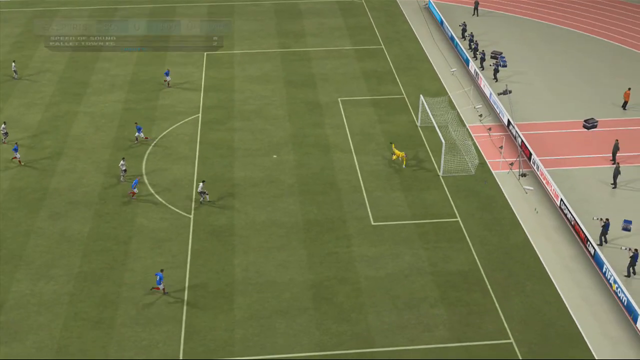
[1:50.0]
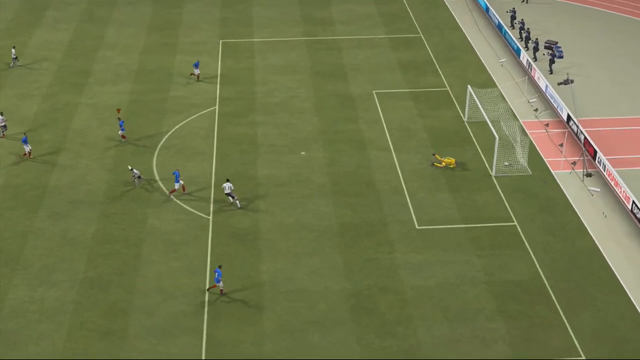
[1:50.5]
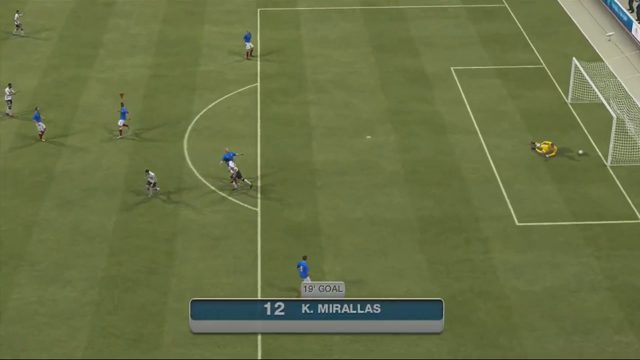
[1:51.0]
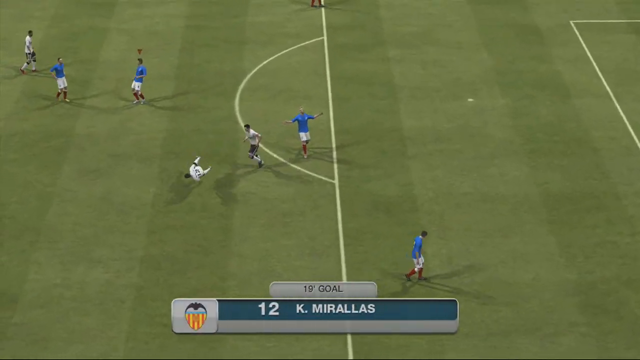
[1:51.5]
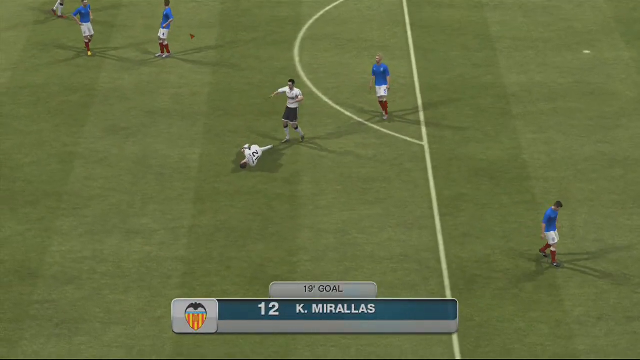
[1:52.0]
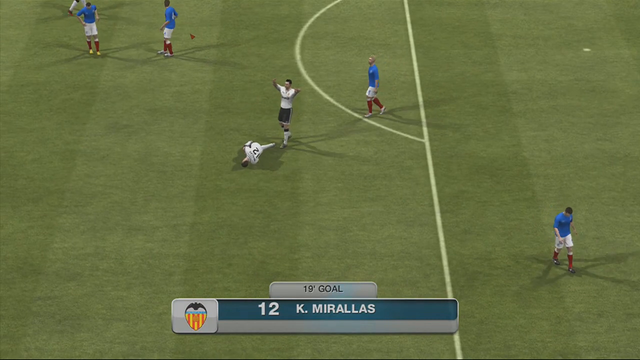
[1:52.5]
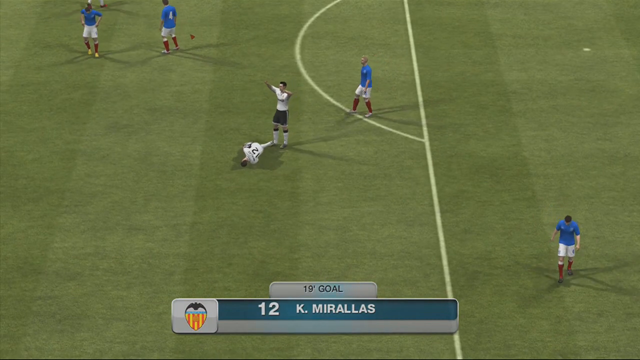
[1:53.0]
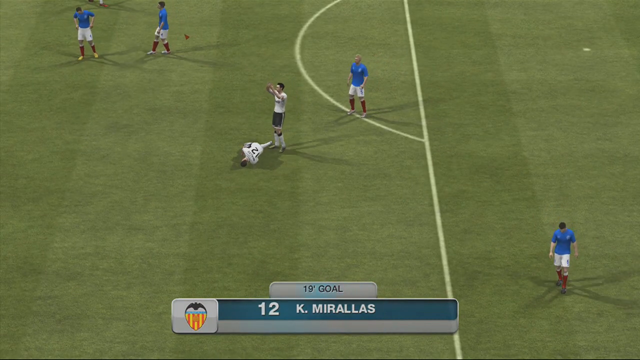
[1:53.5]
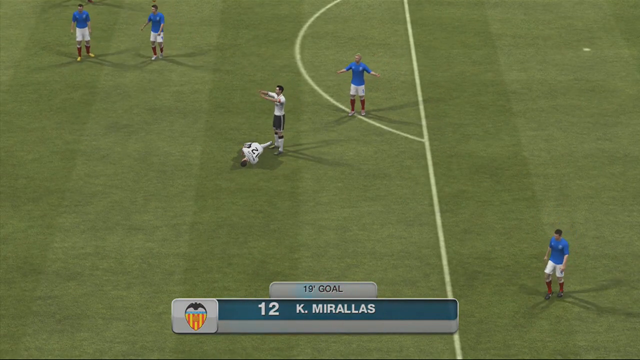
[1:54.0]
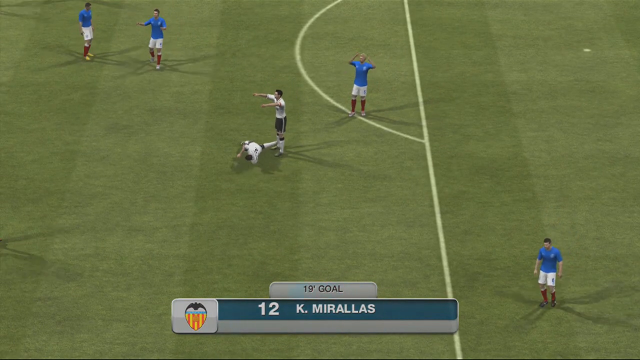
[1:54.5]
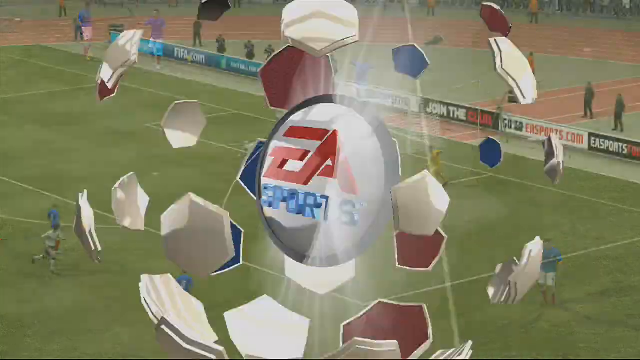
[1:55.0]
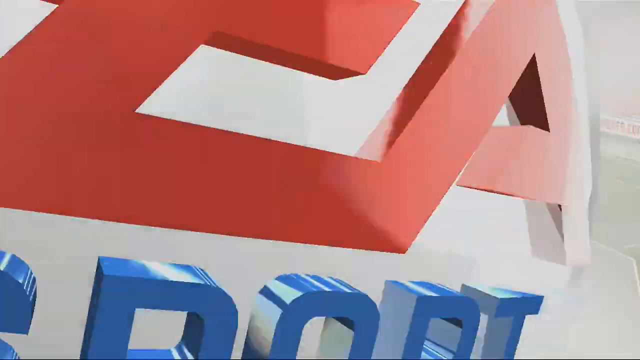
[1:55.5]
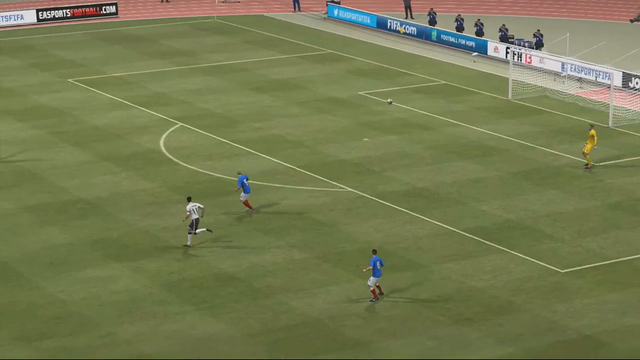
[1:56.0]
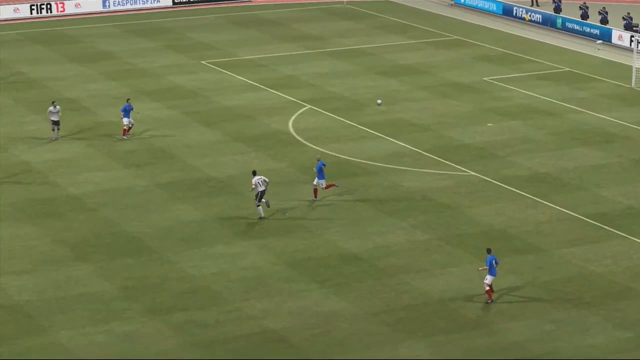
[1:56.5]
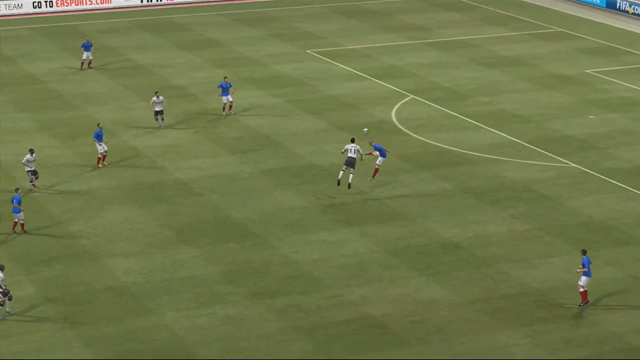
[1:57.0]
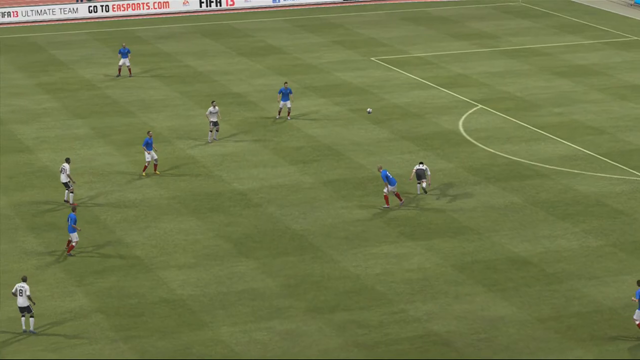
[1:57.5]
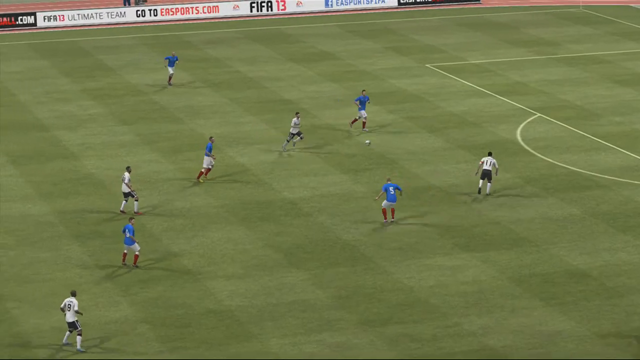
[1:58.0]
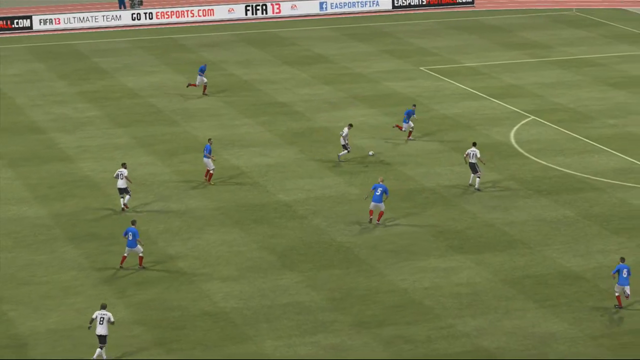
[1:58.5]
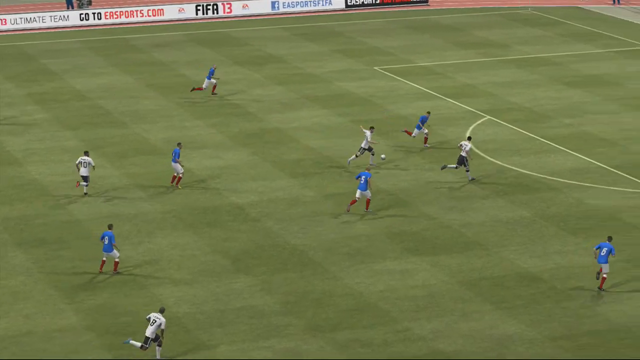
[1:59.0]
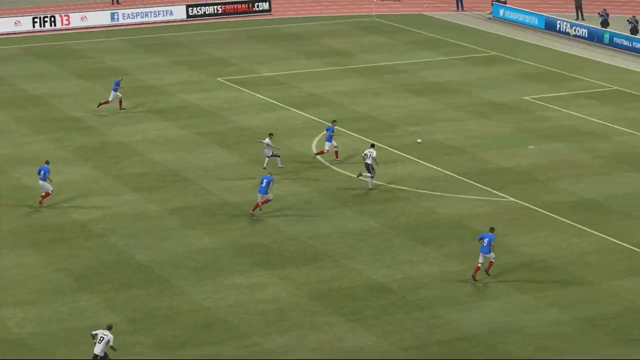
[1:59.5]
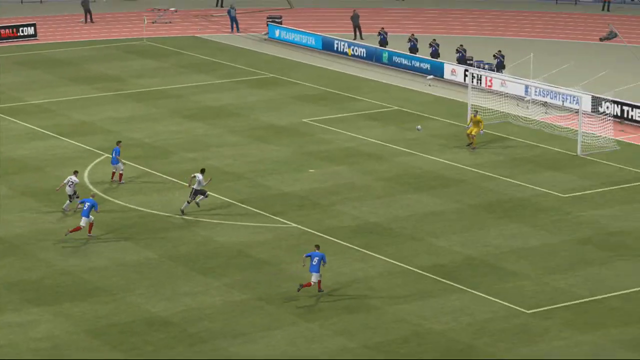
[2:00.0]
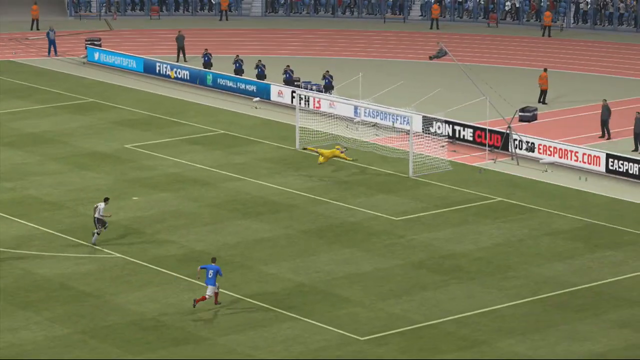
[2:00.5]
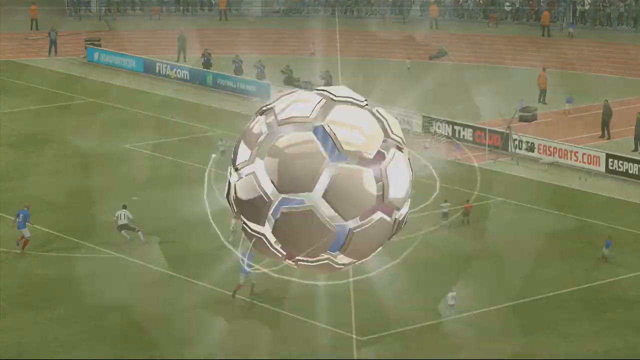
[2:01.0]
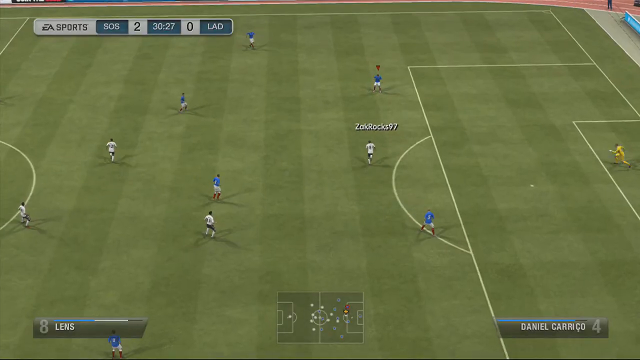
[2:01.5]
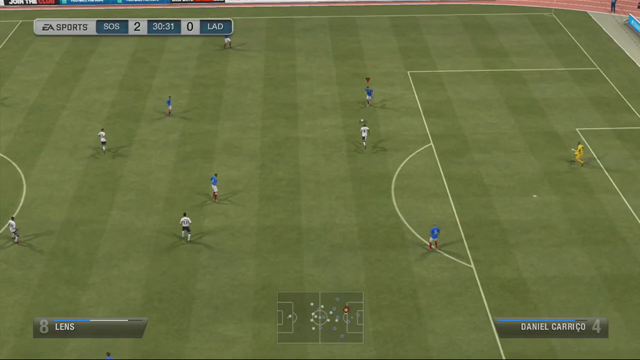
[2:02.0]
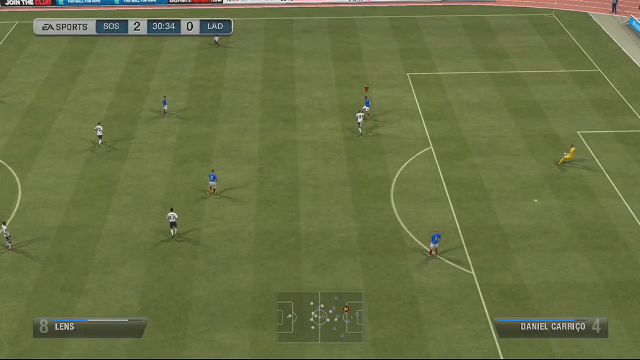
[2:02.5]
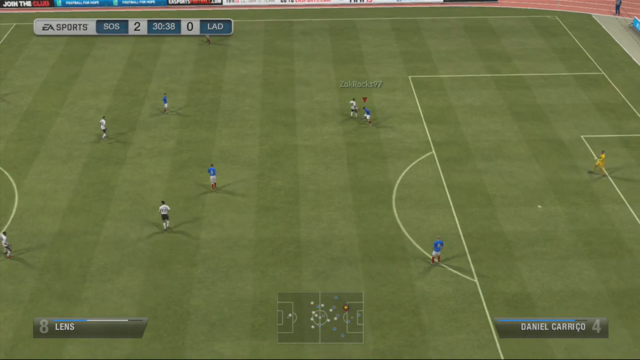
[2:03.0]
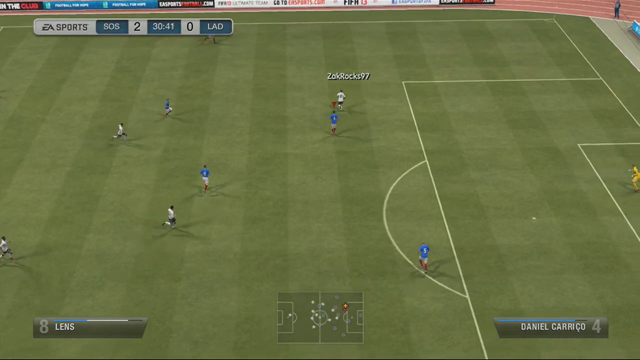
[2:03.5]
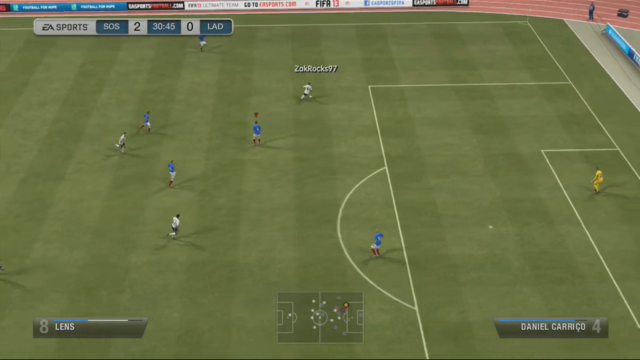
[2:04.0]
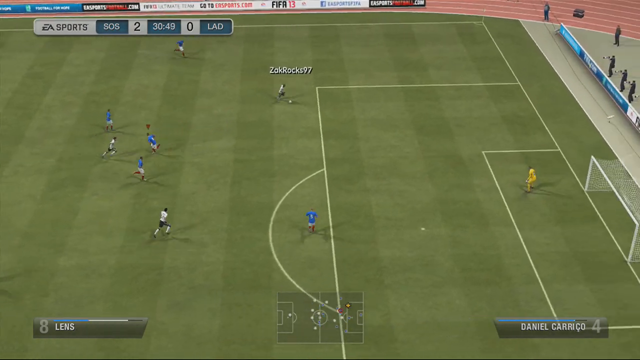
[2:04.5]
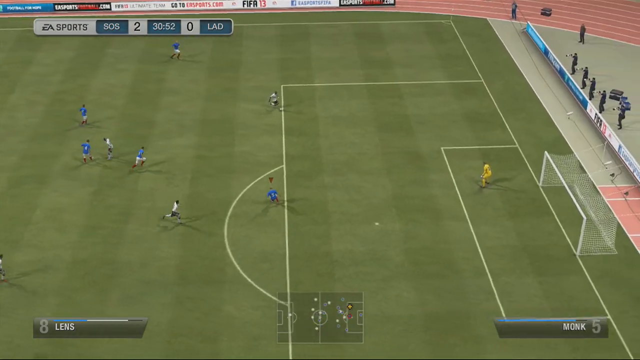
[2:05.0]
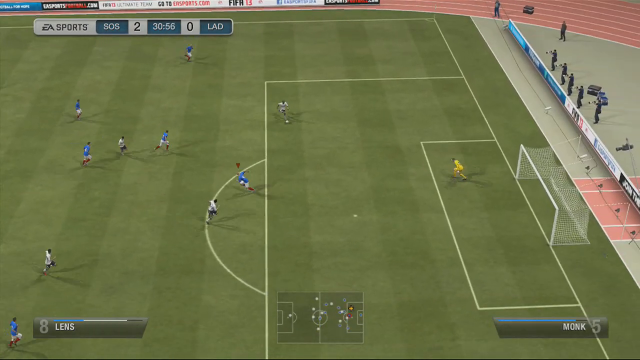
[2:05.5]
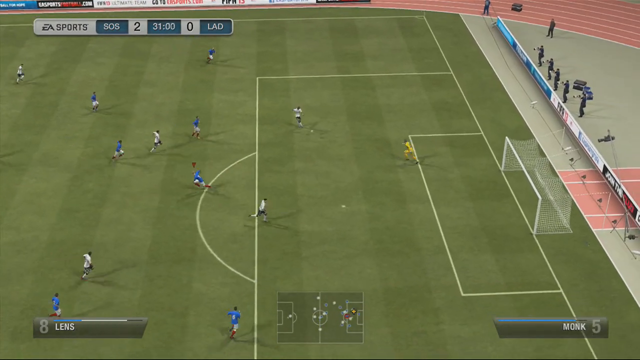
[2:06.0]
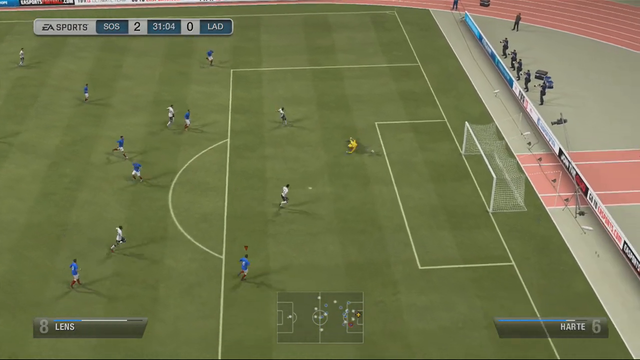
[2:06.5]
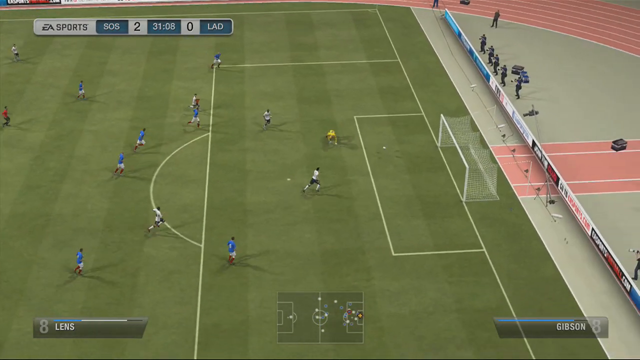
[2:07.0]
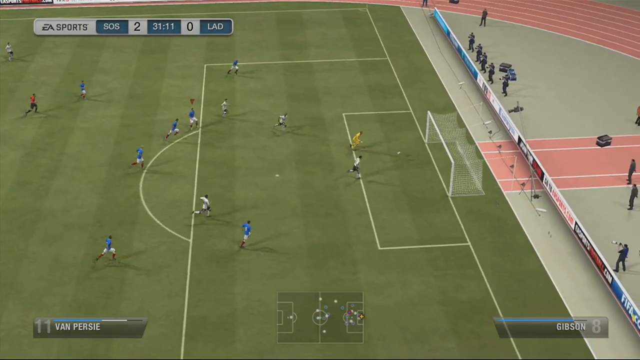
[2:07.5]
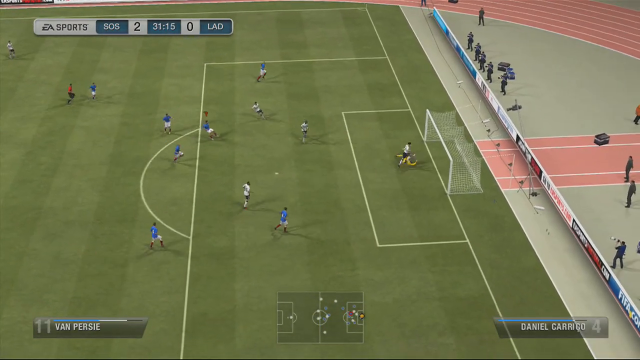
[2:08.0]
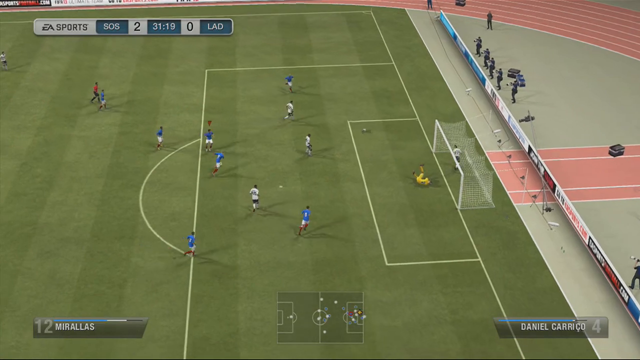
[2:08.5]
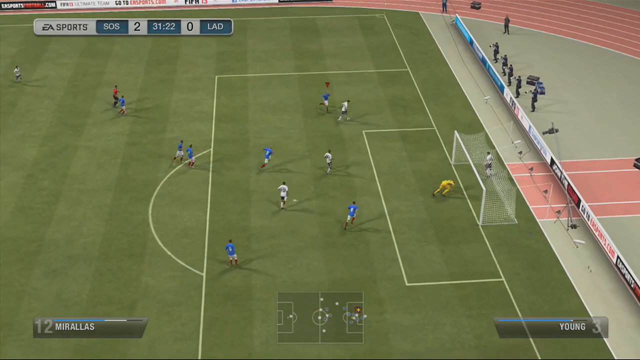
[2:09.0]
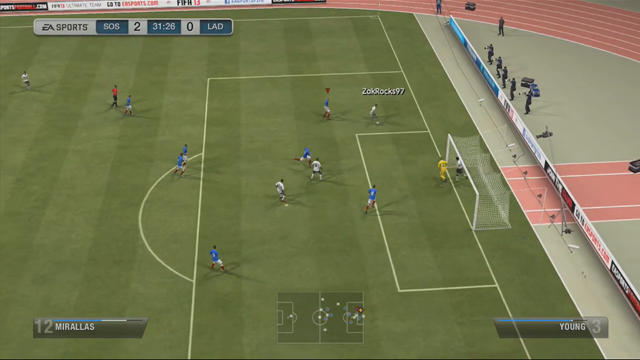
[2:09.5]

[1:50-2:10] A soccer video game shows the light green and darker green striped field from an aerial view, looking down on the players. One team wears short-sleeved dark blue shirts with white shorts, and the other wears short-sleeved white shirts with black shorts. A player in a white shirt with the number 12 on the back of his jersey is down on the ground, and a teammate in a white short-sleeved shirt, black shorts and long white socks stands over the player lying on the ground, waving his hands. The video then cuts to a person in a yellow jersey in front of a goal, a white square with a net on it. He kicks the ball out, a player hits it with his head, and then a player in white kicks it and scores a goal.